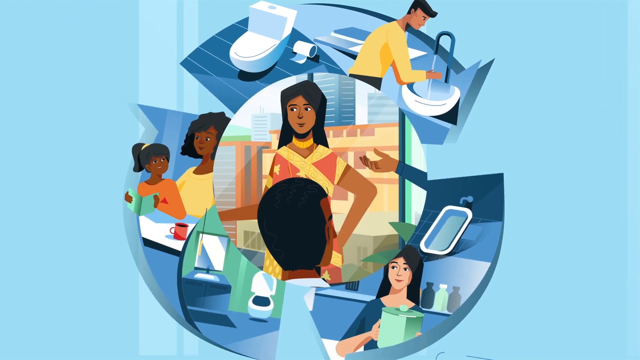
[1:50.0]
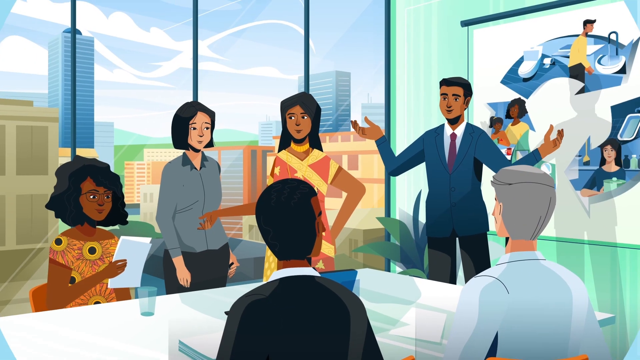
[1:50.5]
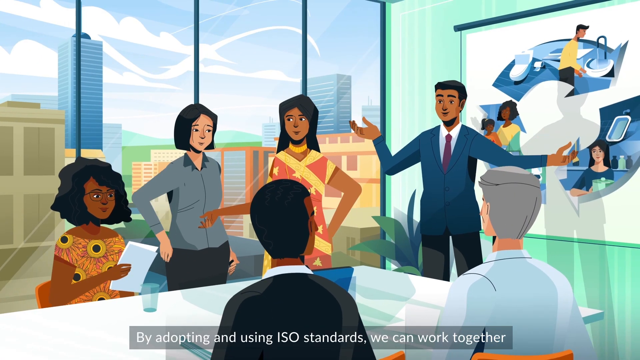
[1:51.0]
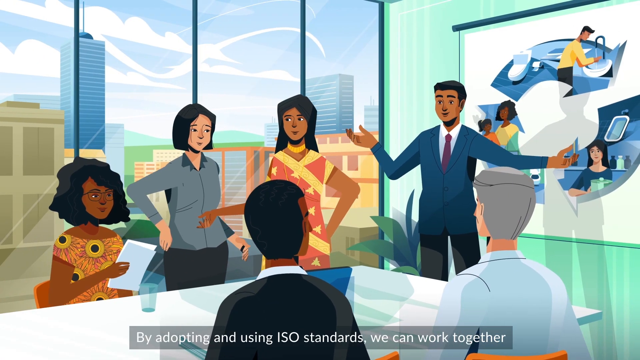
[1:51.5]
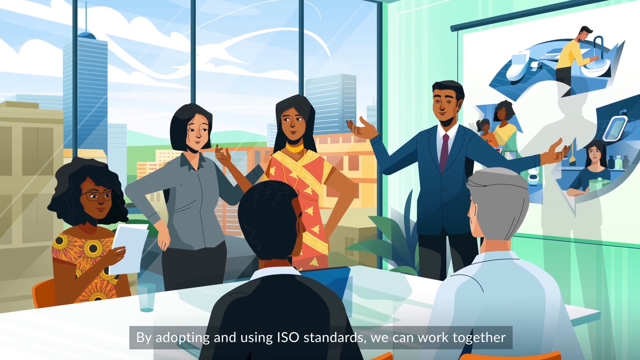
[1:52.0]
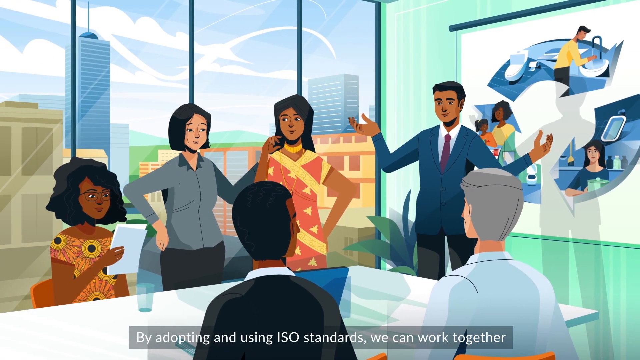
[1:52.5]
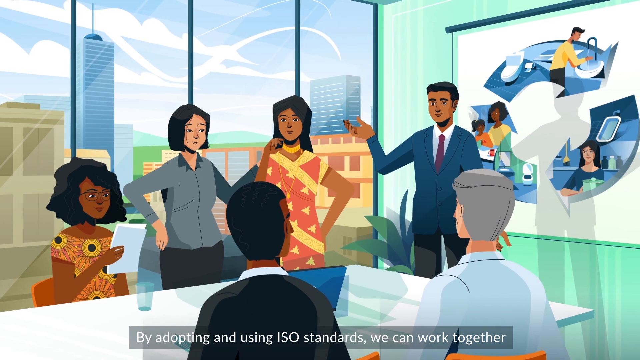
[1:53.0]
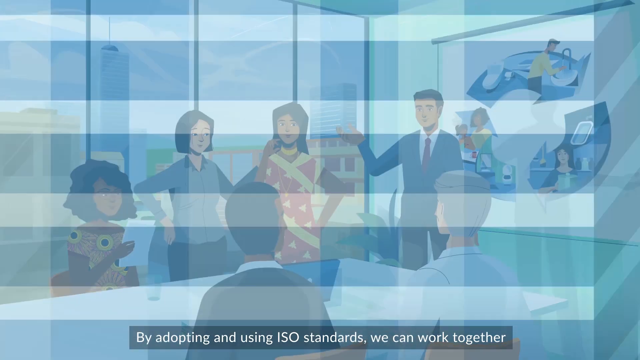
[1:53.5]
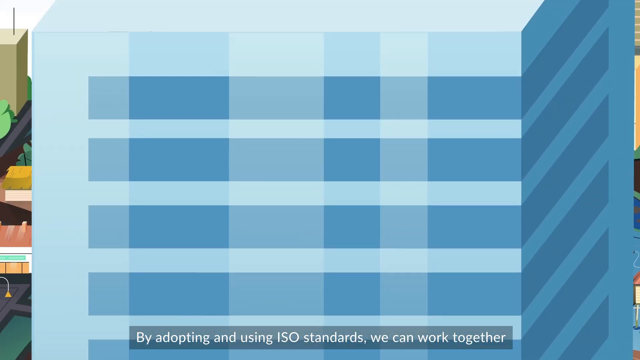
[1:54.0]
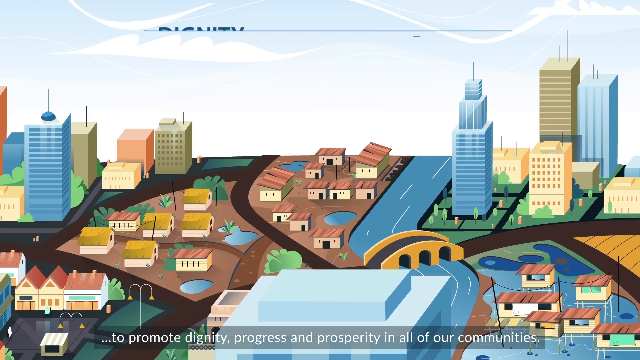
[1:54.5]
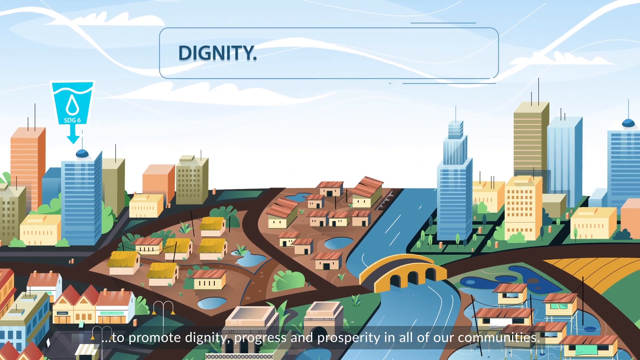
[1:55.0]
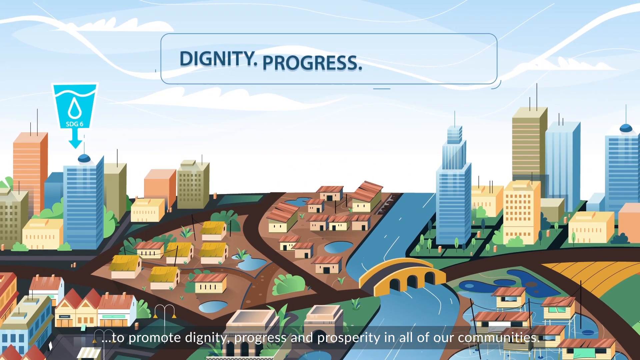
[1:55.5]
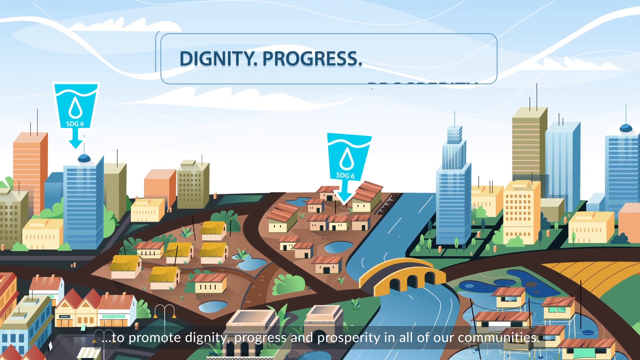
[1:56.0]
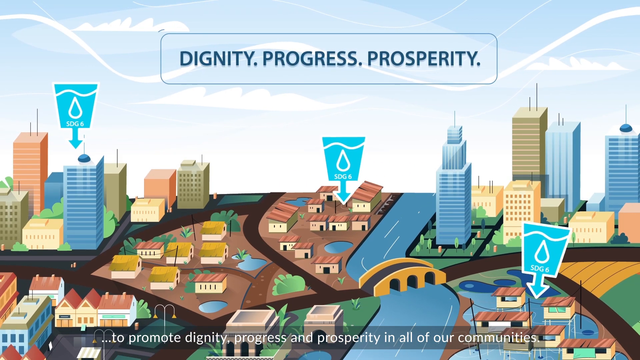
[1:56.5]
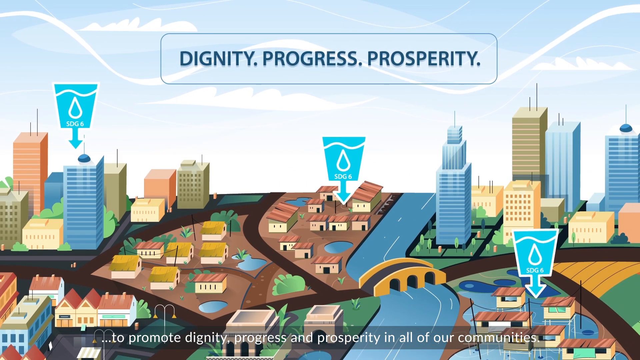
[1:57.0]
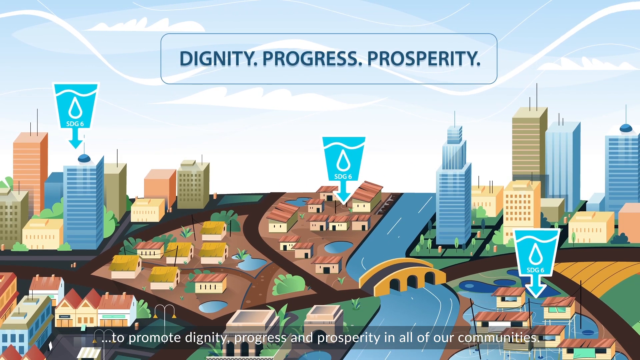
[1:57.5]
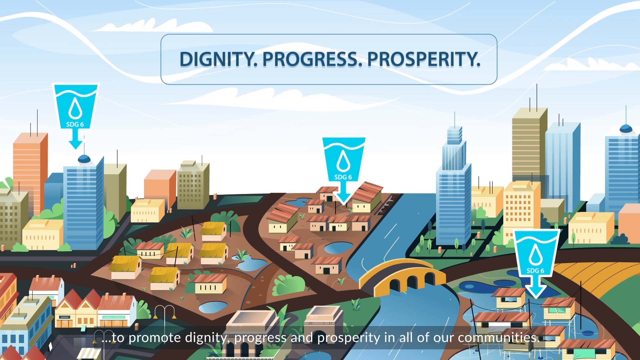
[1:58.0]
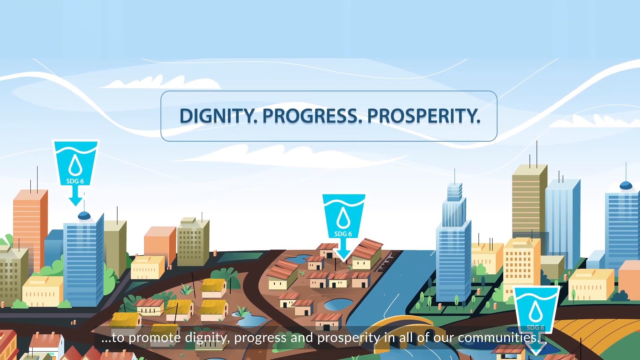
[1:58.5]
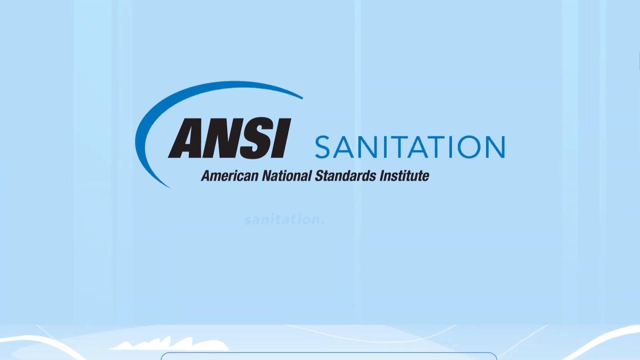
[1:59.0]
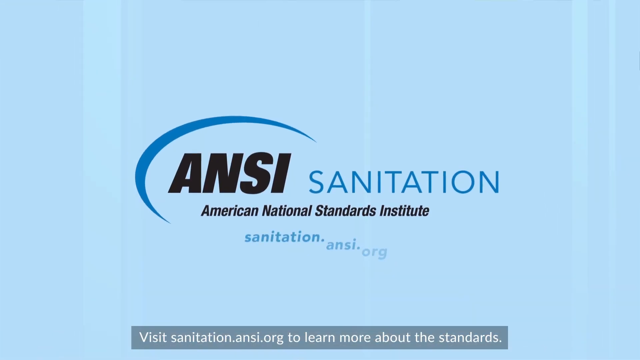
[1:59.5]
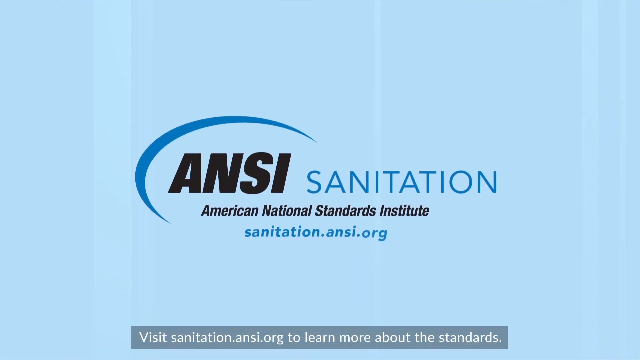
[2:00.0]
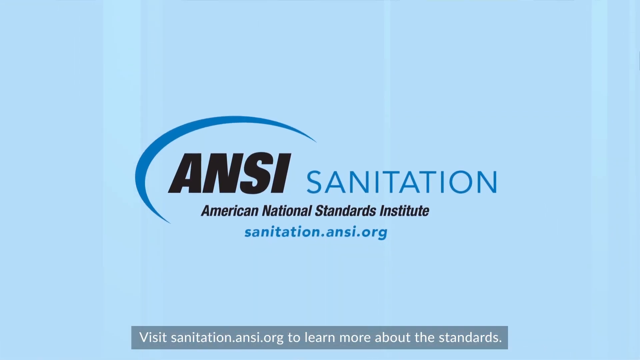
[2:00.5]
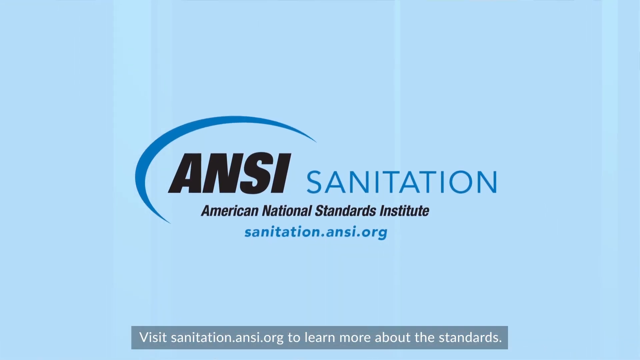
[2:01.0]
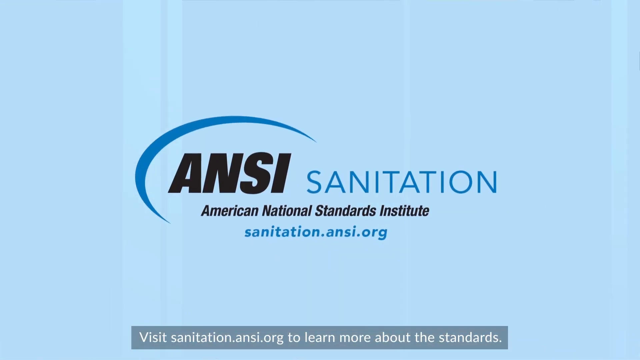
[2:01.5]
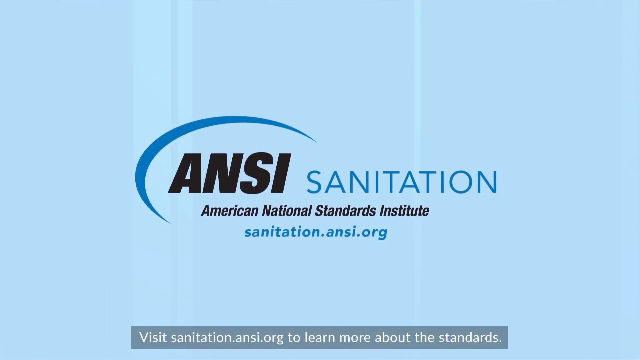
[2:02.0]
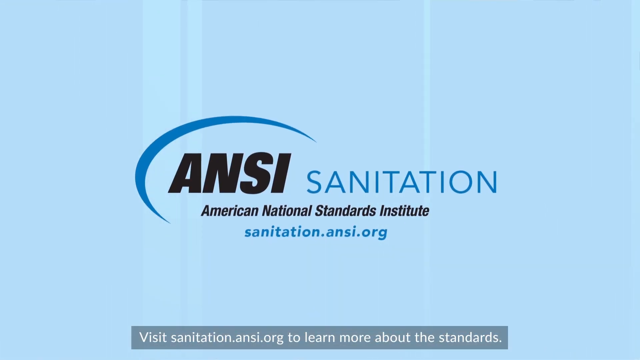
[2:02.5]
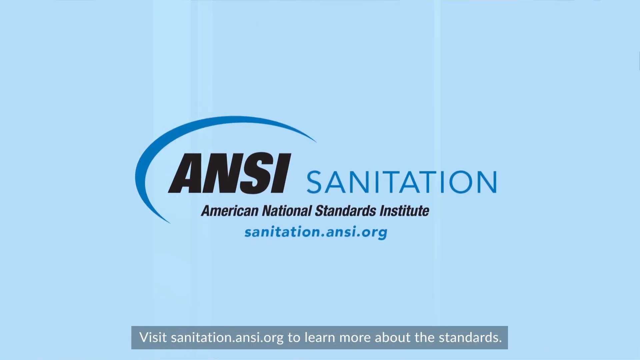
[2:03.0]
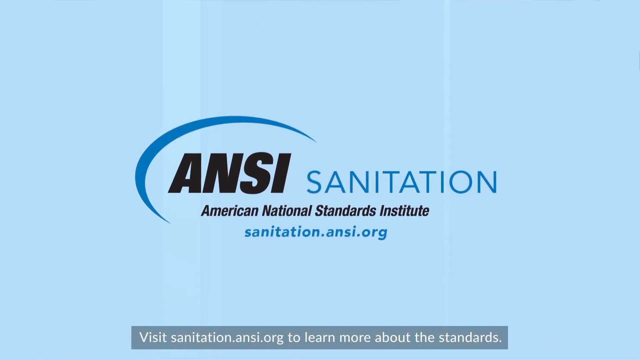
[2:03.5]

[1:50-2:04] A community is shown, and the video deals with toilets and waste.